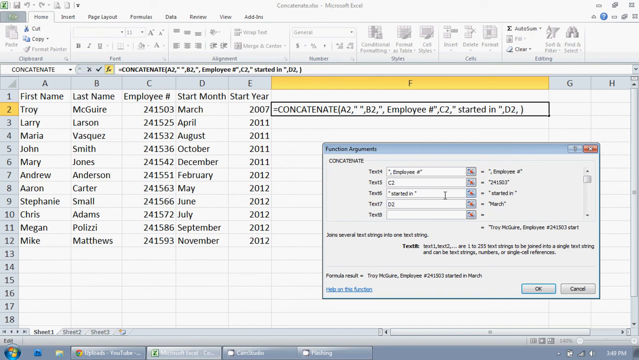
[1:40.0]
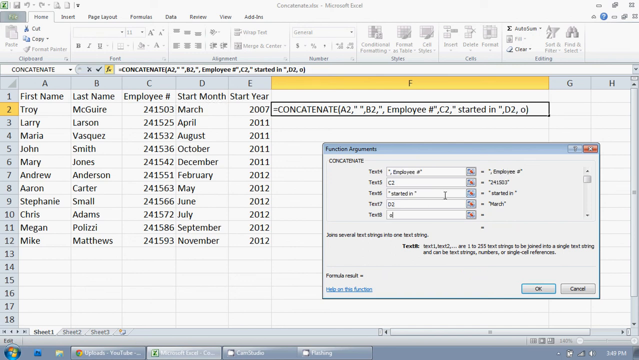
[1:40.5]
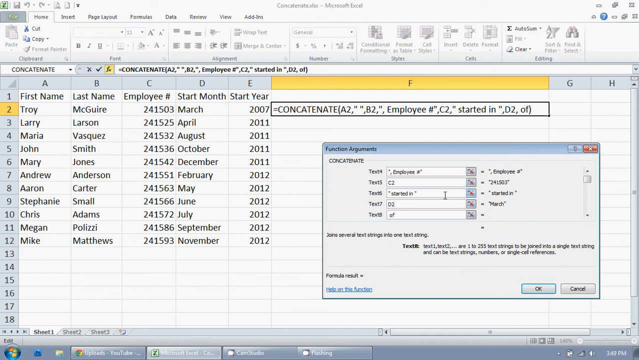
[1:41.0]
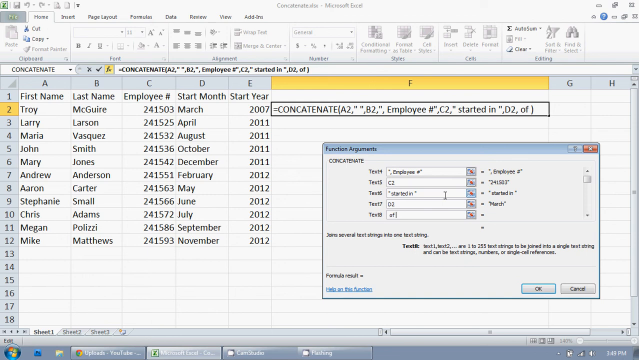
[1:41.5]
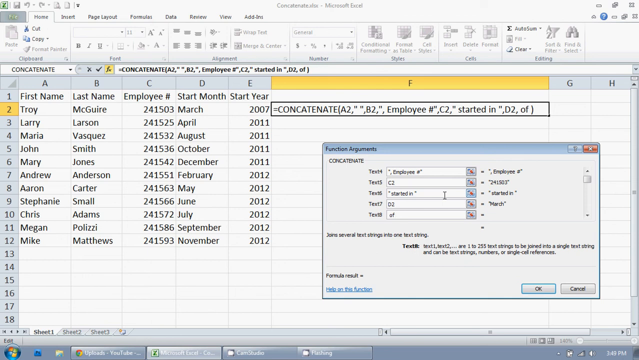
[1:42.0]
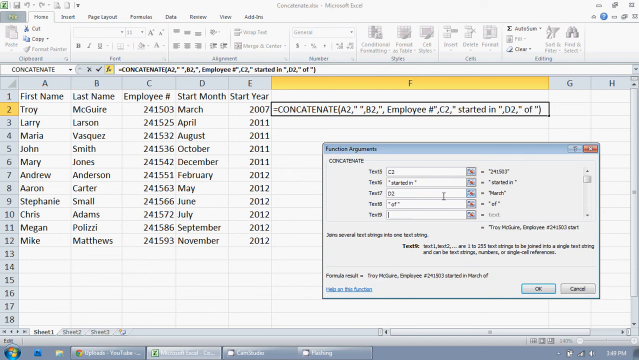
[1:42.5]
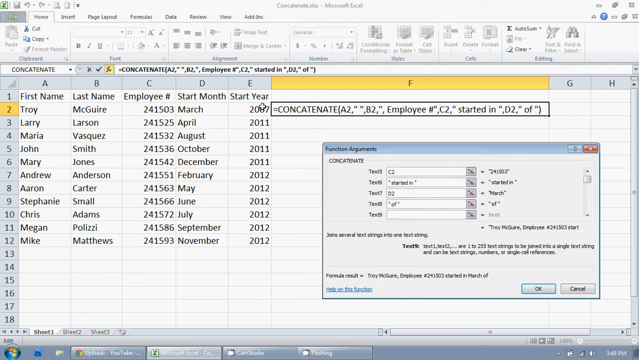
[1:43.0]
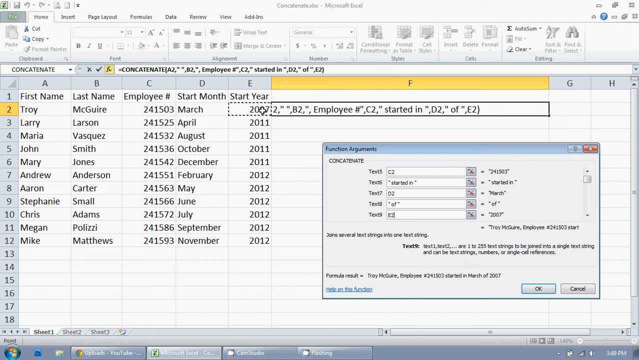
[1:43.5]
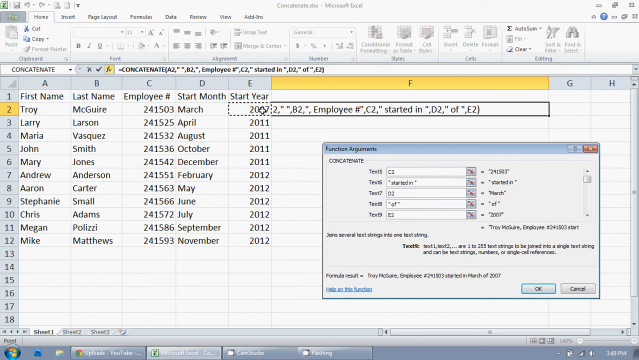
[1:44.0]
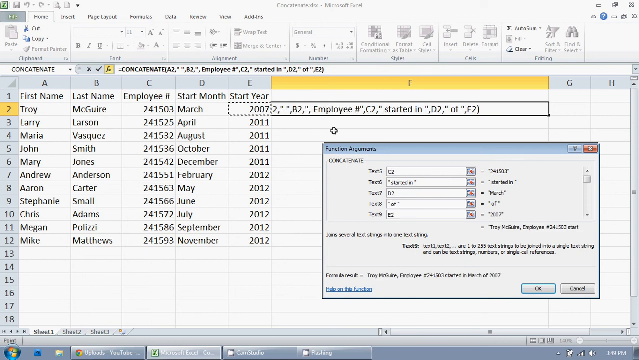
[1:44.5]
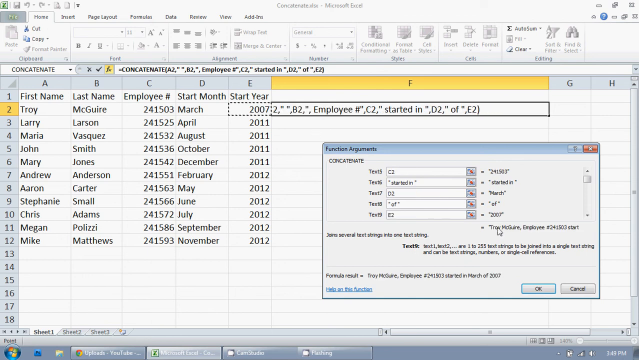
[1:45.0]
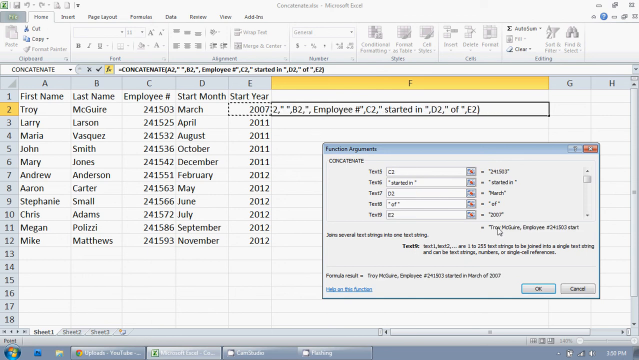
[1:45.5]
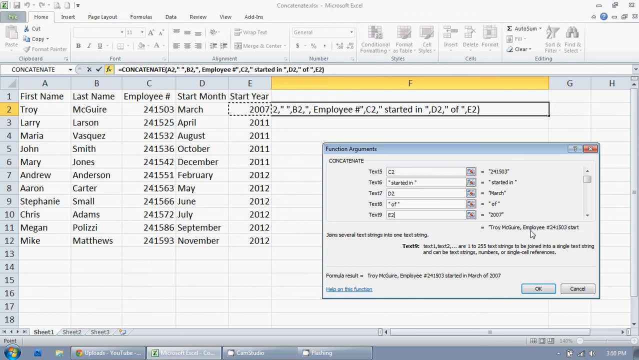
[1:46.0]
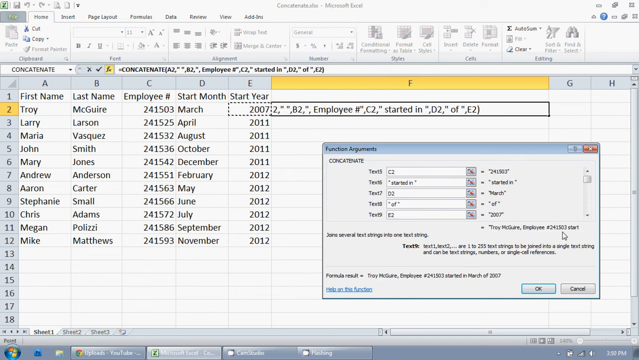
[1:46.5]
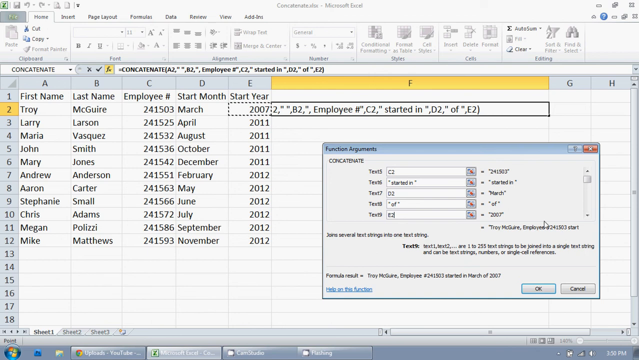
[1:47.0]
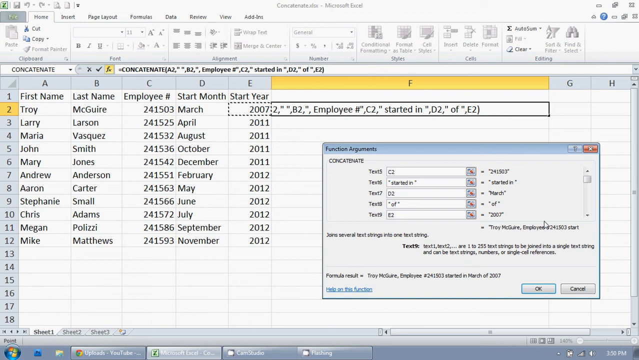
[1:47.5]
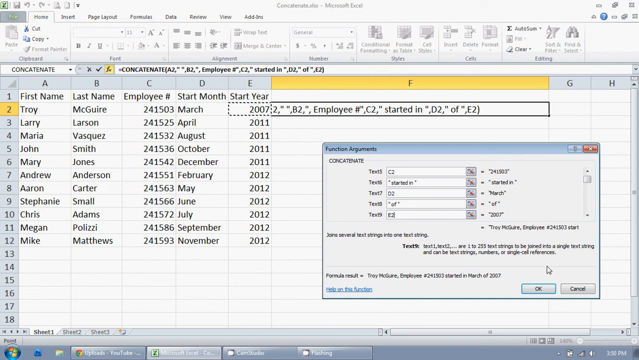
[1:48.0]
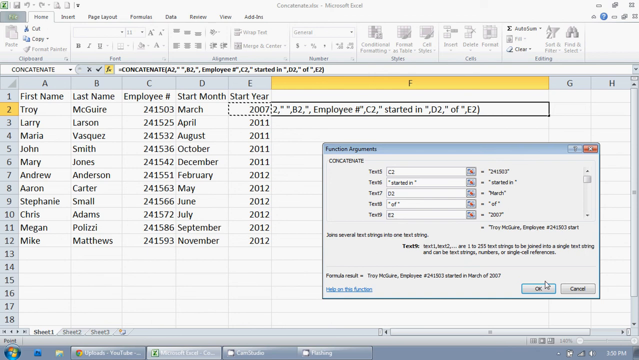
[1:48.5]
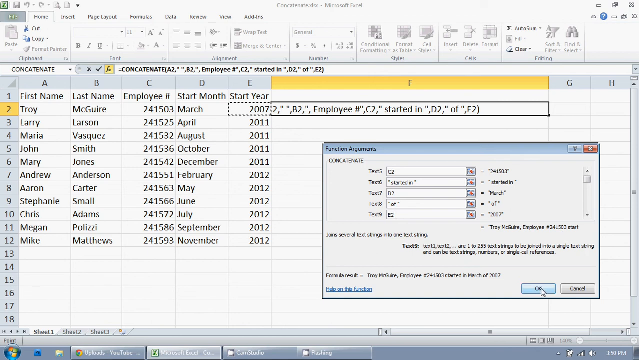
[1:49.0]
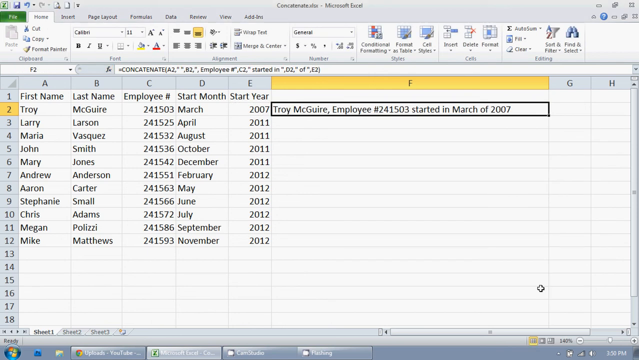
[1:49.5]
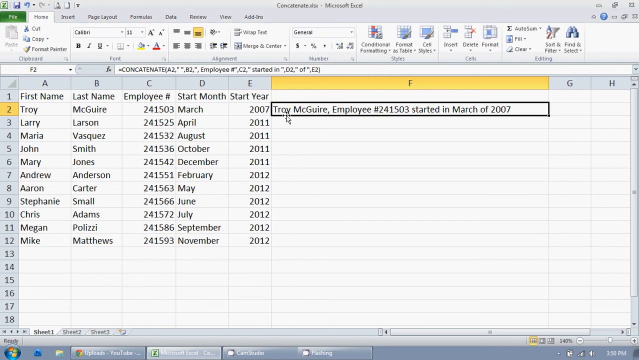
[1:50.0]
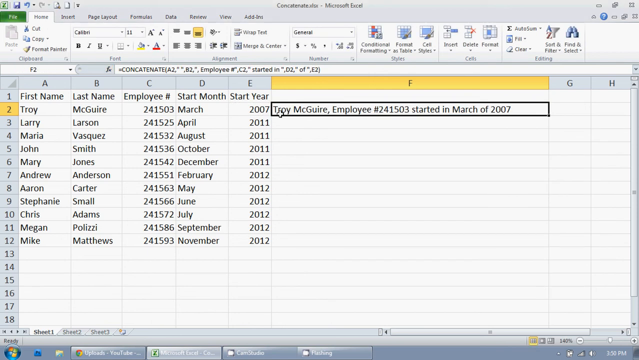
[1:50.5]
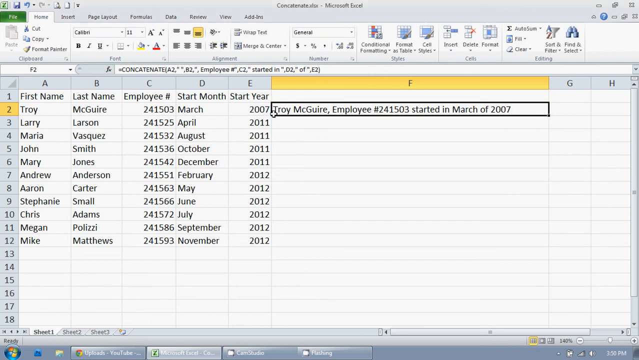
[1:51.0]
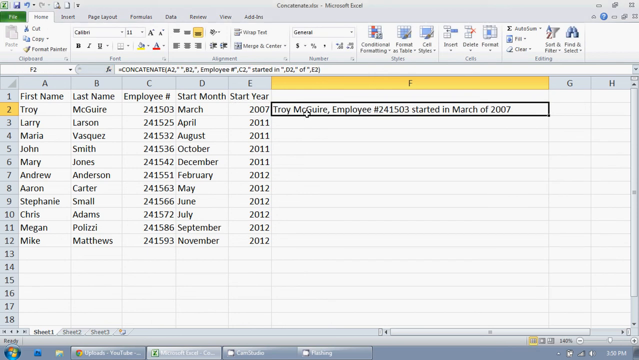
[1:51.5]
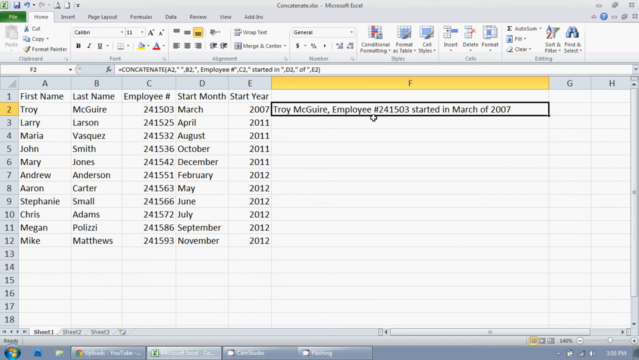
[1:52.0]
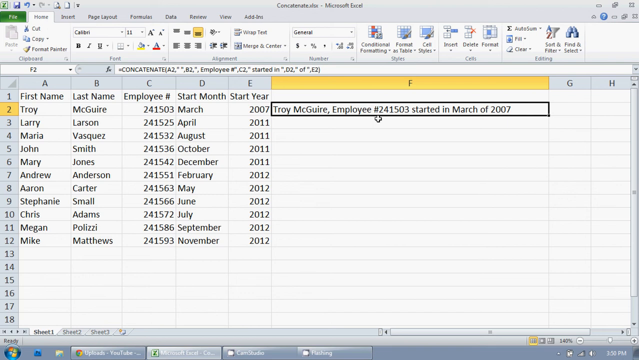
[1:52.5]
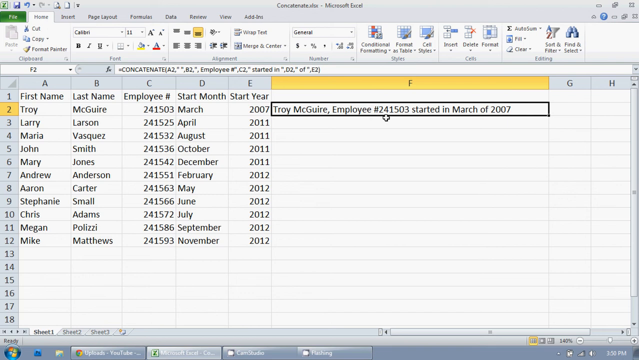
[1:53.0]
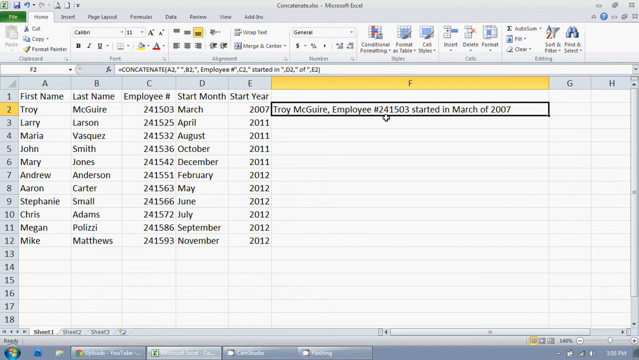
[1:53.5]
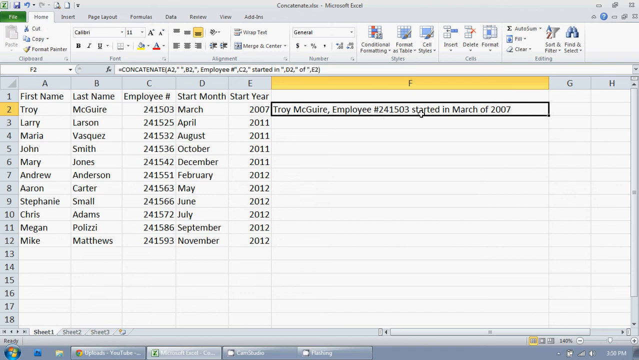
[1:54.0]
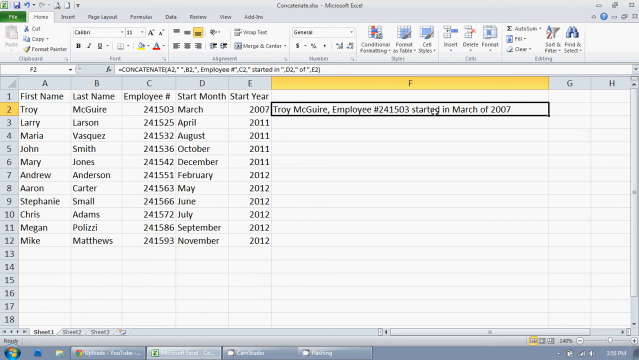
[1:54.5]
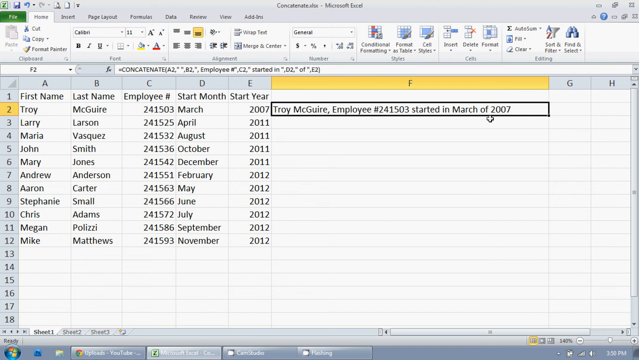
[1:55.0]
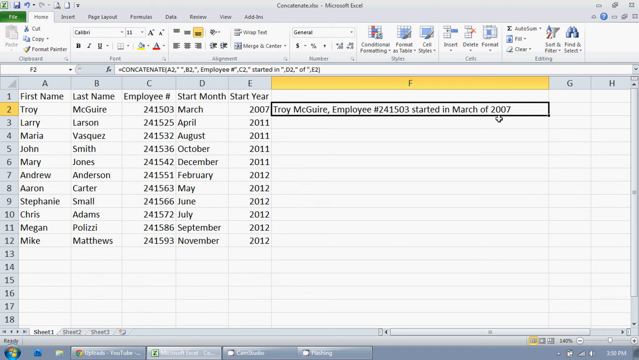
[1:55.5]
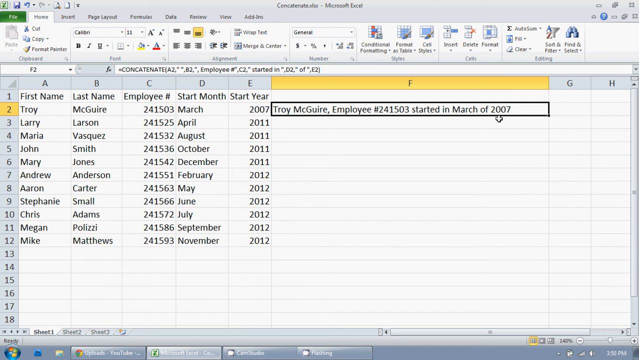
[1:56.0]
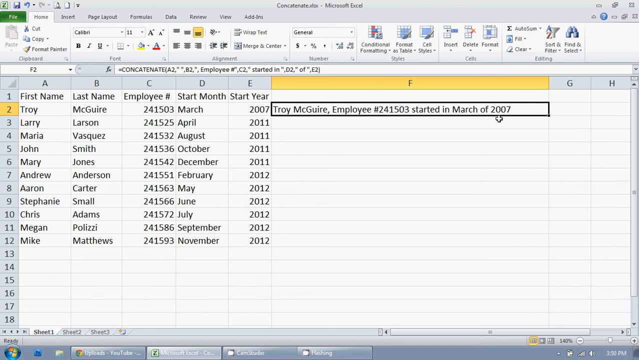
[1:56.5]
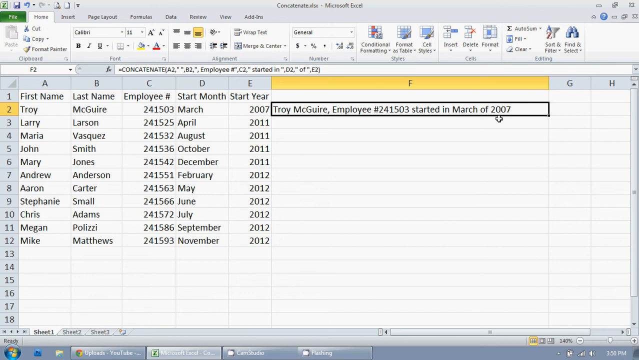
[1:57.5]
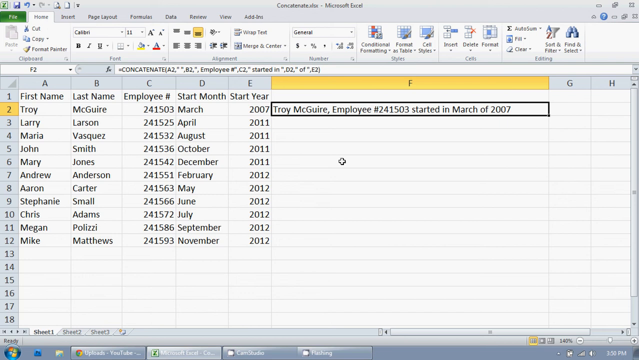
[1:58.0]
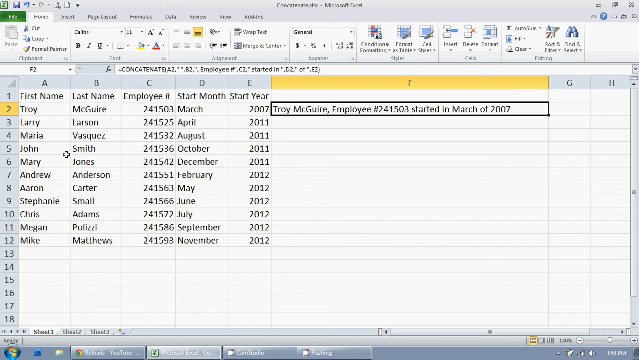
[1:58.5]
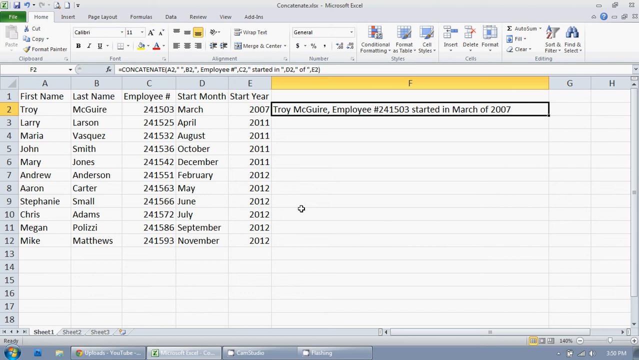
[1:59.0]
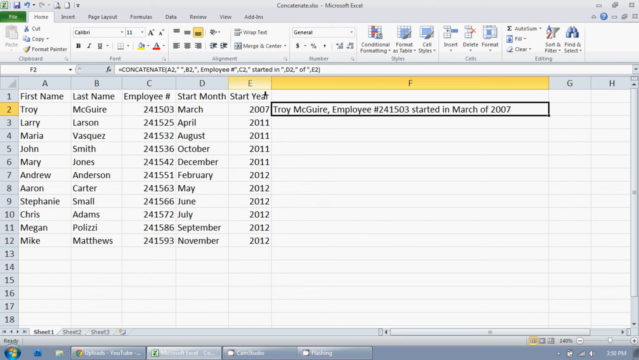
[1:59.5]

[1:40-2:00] Text 8 appears in the toolbar, and the teacher types "of" in it; the word "of" then appears in the selected cell in row 2, column F. The mouse clicks the year 2007 under start year in row 2, column E, and the contents of E2 appear in text 9 in the toolbar. A complete sentence appears in the selected black-boxed cell in row 2, column F: "Troy McGuire, Employee #241503 started in March of 2007." The cross-shaped cursor hovers over this sentence, then moves randomly around the page. The result combines the employee's name, employee number, and the month and year he started into one message.